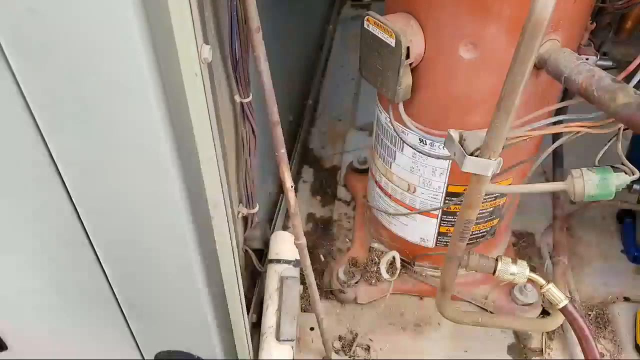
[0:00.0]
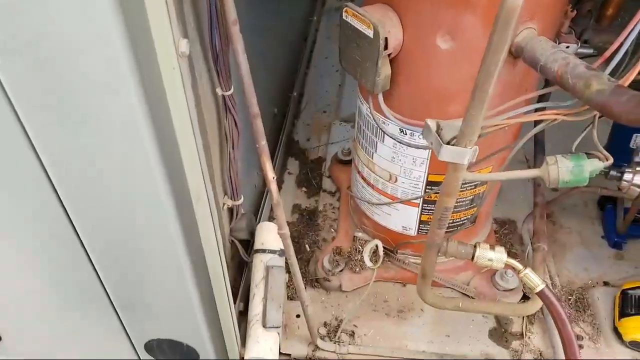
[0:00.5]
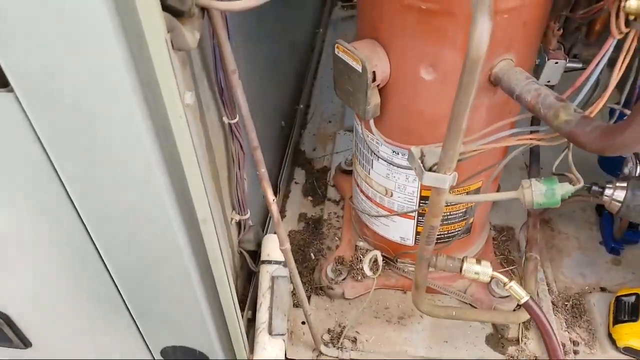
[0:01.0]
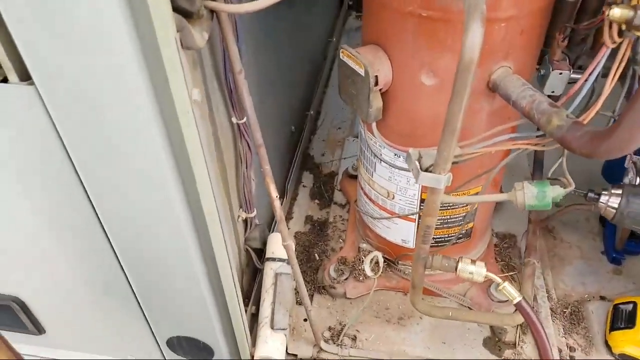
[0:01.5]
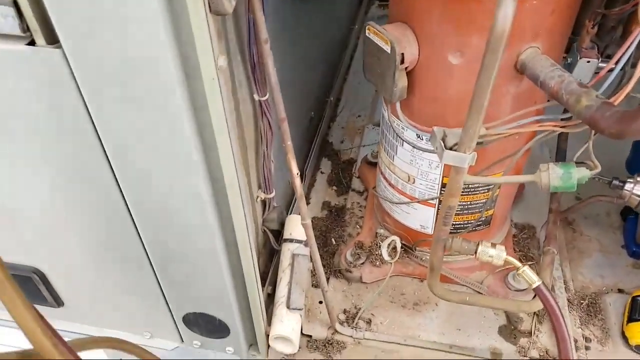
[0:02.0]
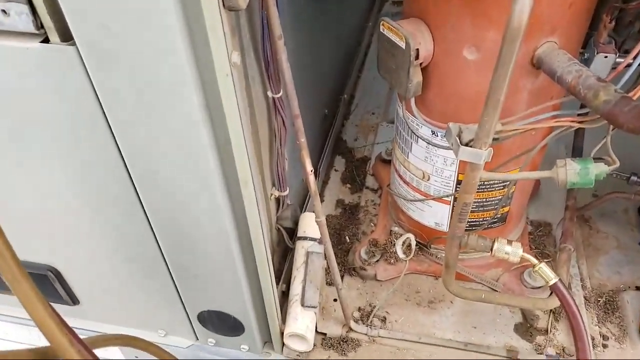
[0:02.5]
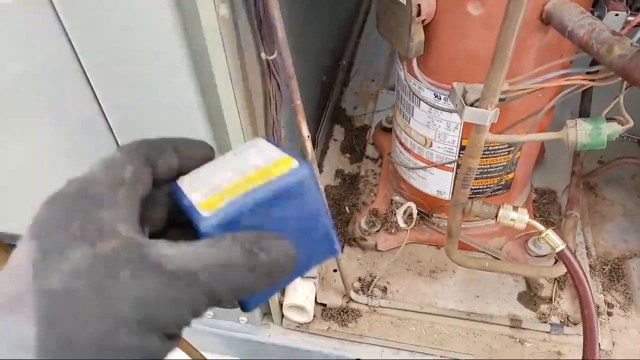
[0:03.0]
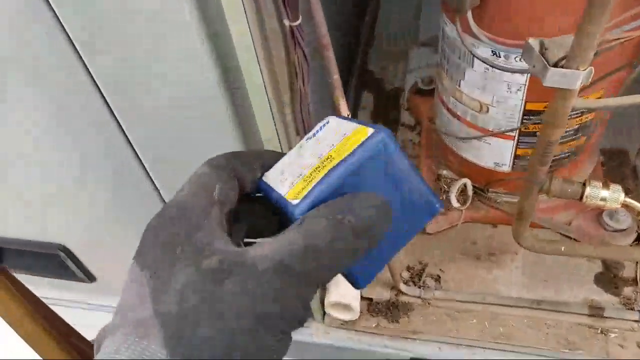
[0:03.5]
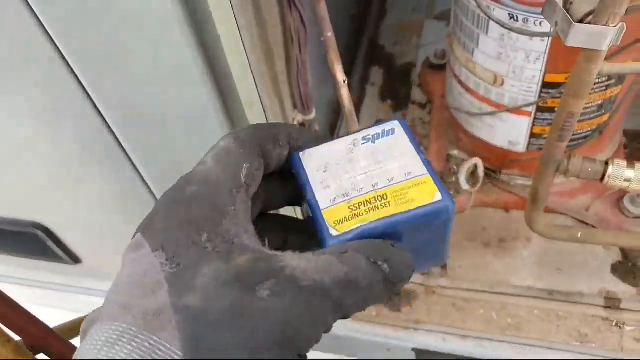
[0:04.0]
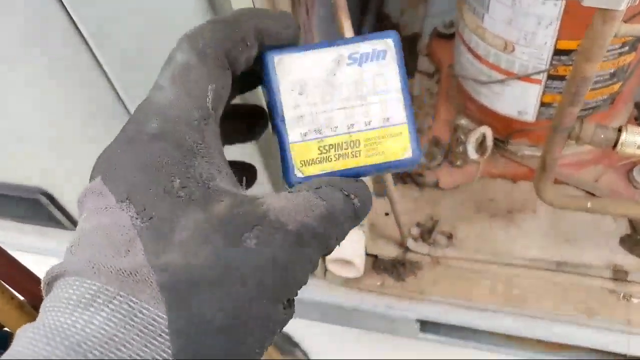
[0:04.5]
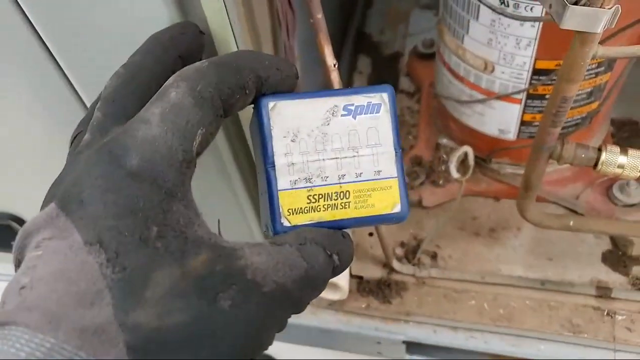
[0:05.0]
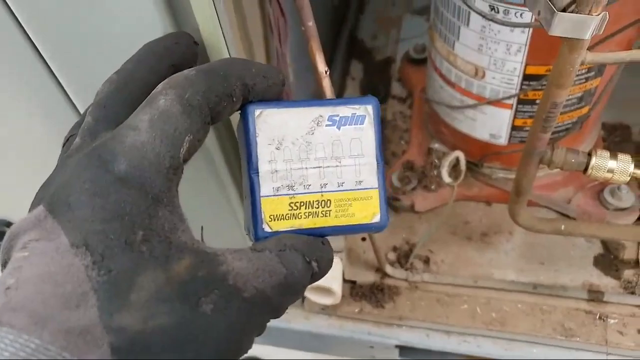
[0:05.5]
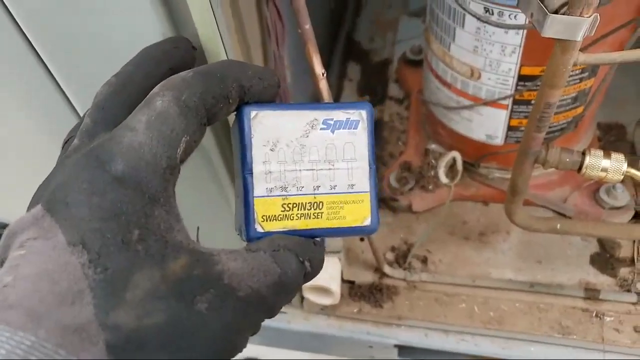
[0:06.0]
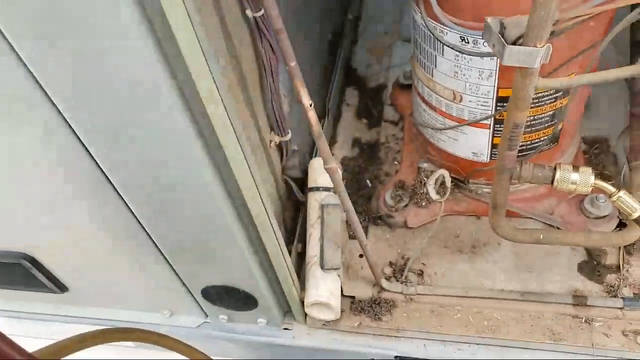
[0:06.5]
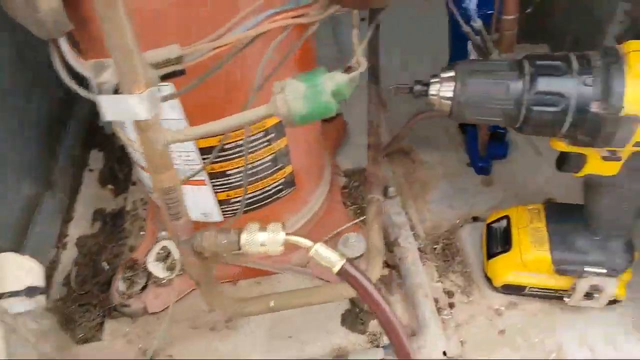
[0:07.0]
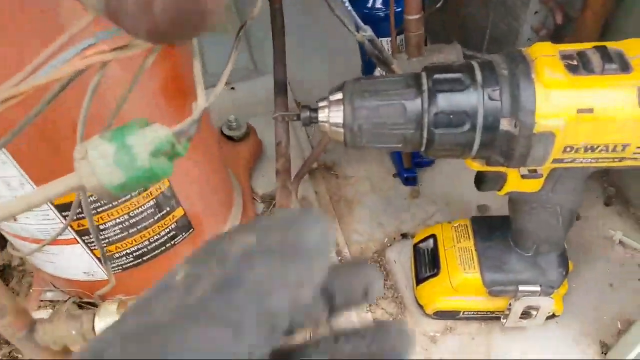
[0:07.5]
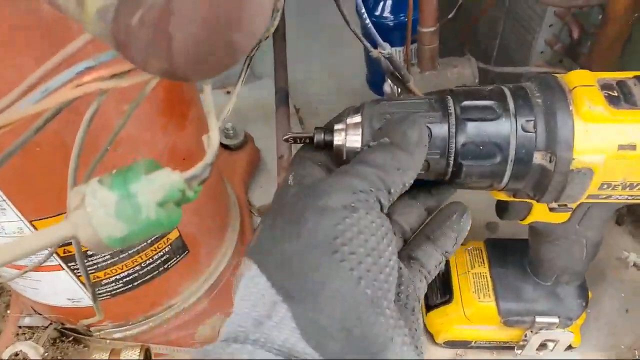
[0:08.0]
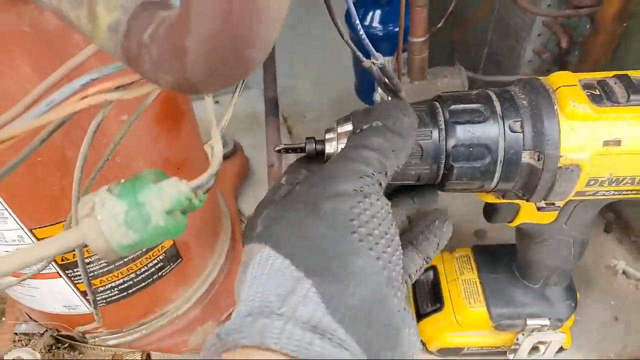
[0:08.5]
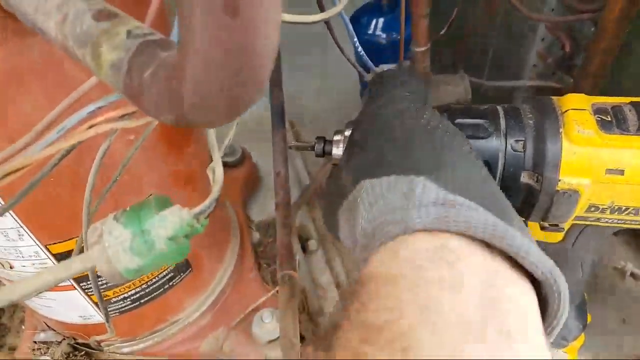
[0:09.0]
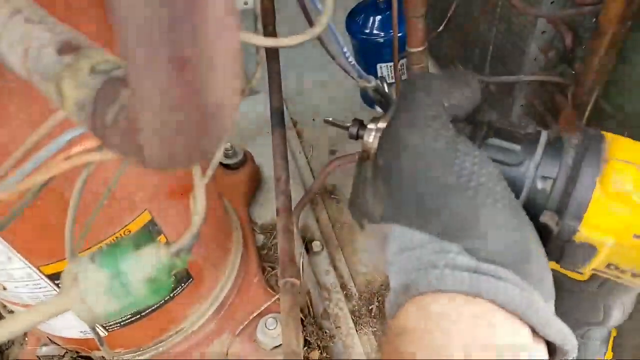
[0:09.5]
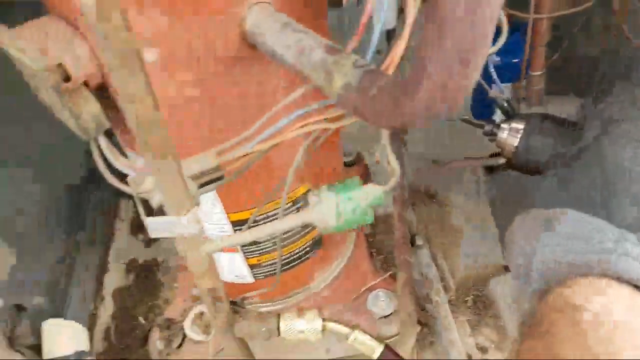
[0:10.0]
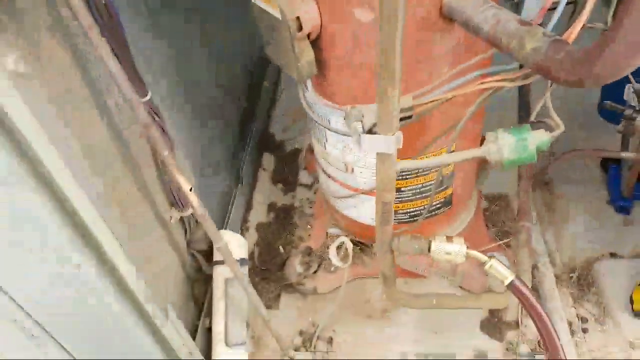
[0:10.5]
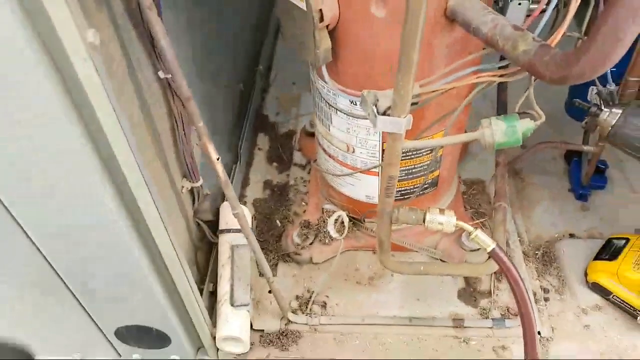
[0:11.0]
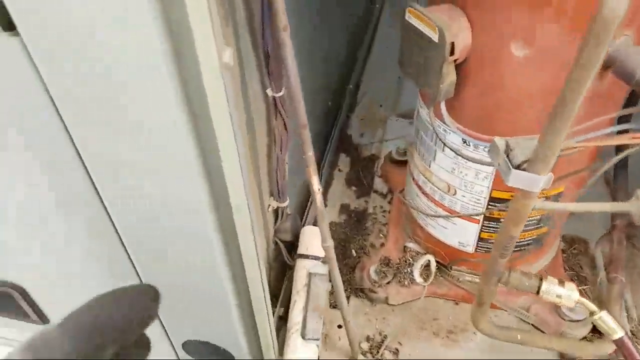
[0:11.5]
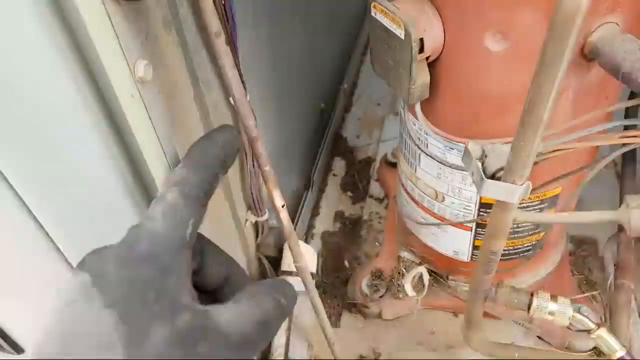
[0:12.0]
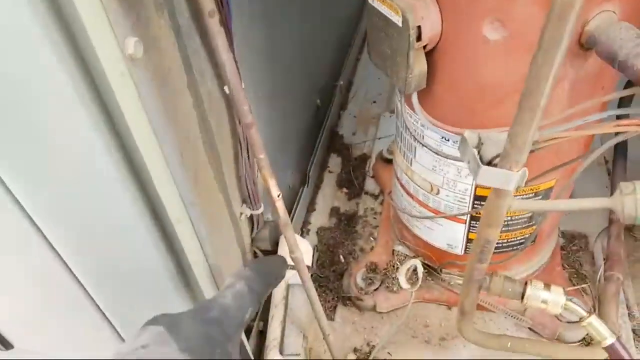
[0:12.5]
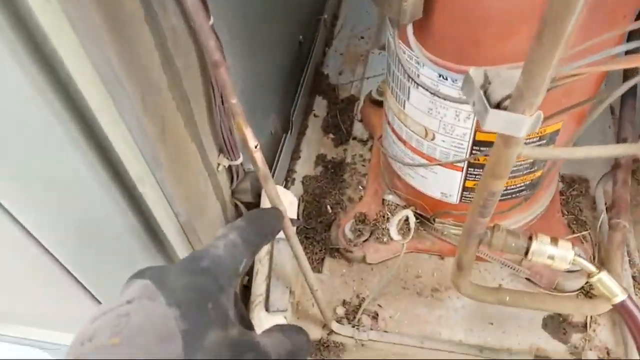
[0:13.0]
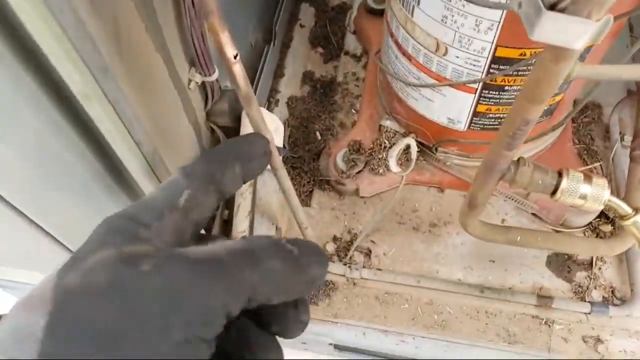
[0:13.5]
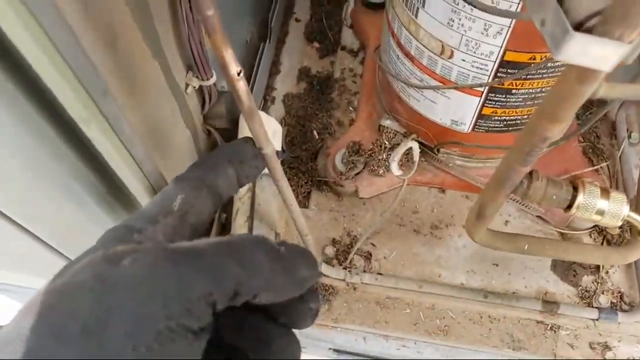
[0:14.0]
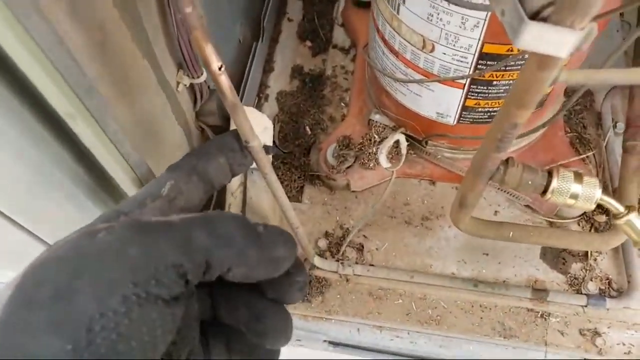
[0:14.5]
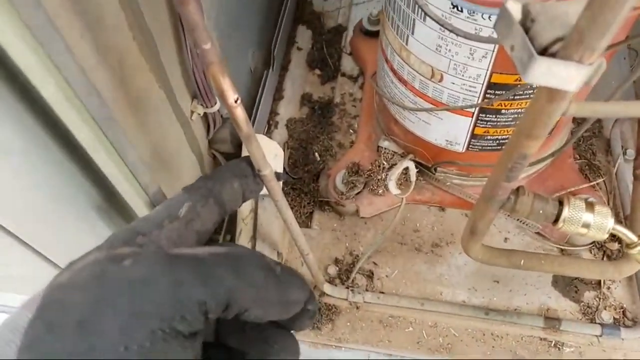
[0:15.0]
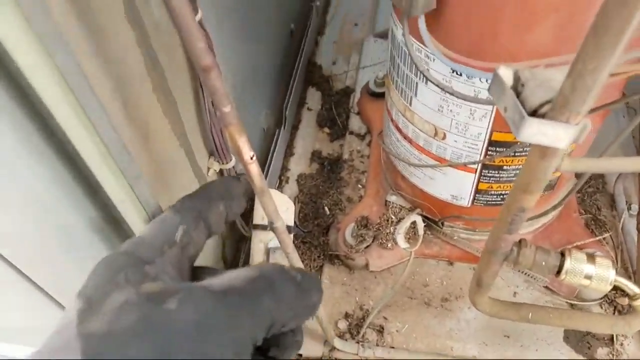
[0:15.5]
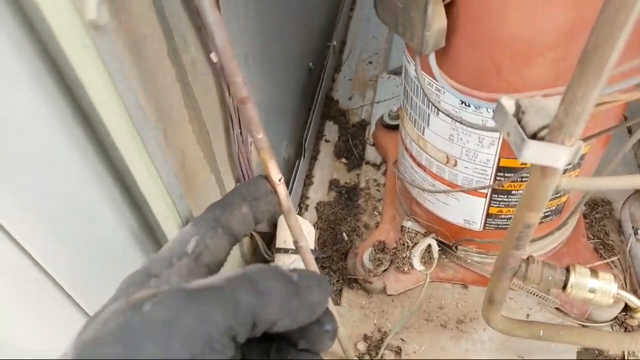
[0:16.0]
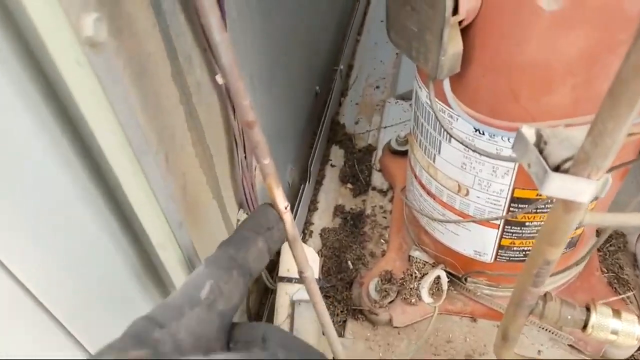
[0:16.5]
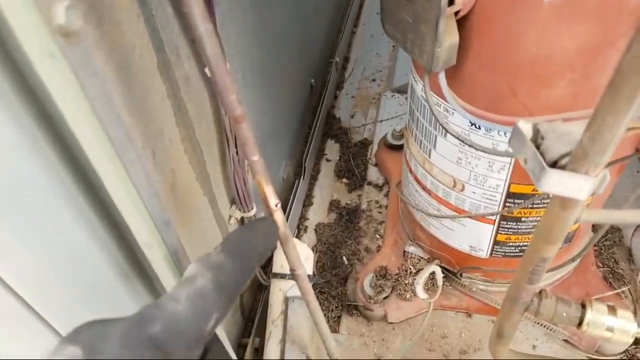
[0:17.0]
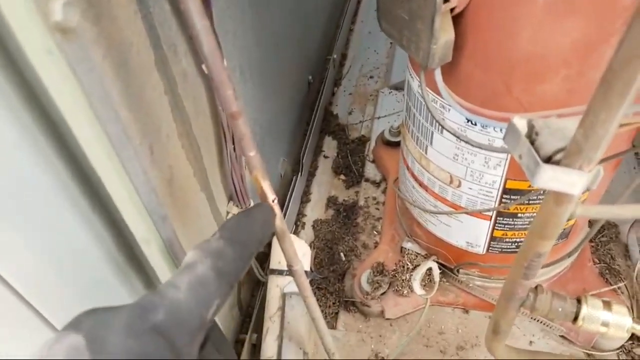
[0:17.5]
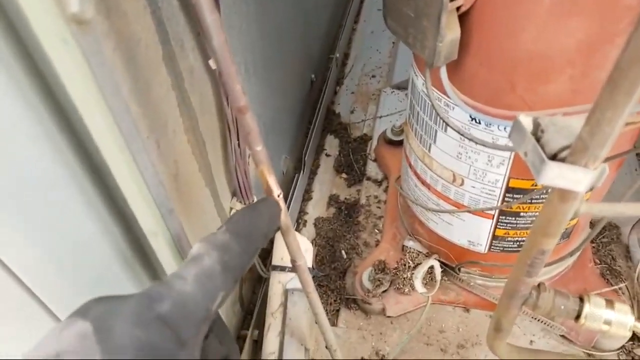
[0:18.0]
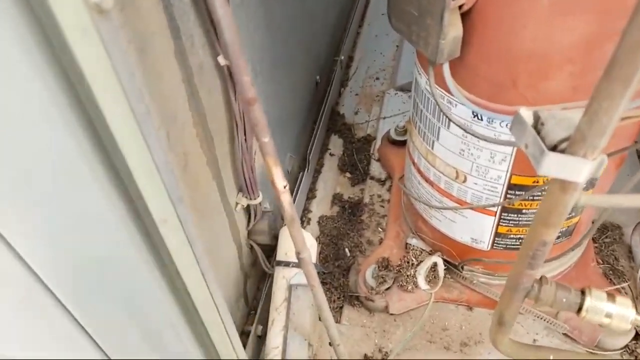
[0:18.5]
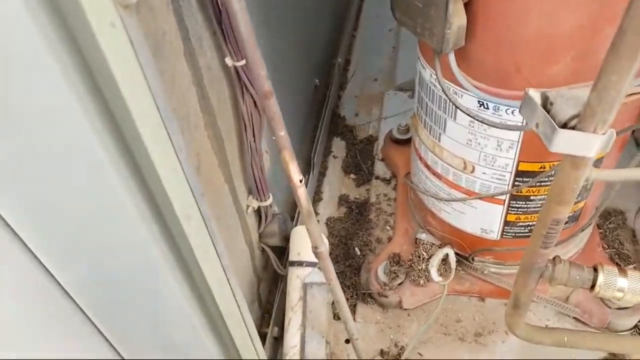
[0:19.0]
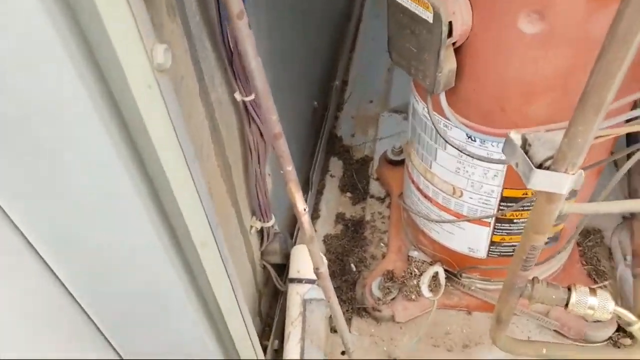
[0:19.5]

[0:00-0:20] The video opens on what appears to be a used water heater with multiple pipes attached. It appears to be made of steel, painted orange, and there are labels on the back: white barcodes and a black and yellow warning label. A large pipe extends into the side, and another pipe extends down the middle, connected to two other pipes, along with a green cylinder. Multiple electrical cords come into it and into the back. The background is a white wall, and the orange steel container is bolted to the cement floor. The camera is a bit shaky, moving left to right, then up and down. A hand comes into the screen on the left side, wearing what appears to be a black rubber glove and holding a blue square plastic container that says "spin 300"; "spin" is in the upper right-hand corner of the square. The video pans right, showing a black and yellow Dewalt battery-operated drill. The left glove takes hold of the drill bit head holder and spins it clockwise. The video pans back, and the left hand points to a thin copper pipe to the left of the water heater. There is a small hole in the thin copper pipe.